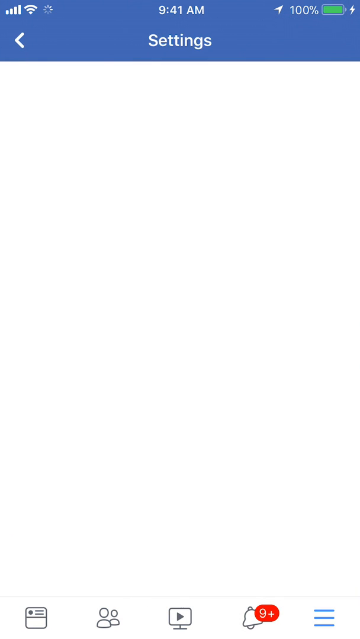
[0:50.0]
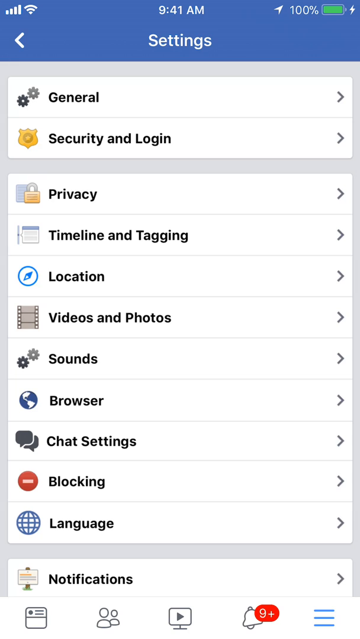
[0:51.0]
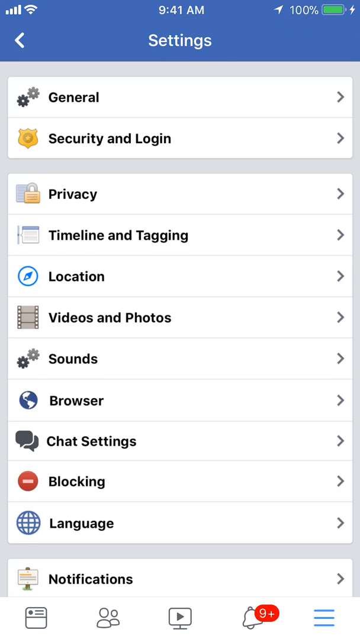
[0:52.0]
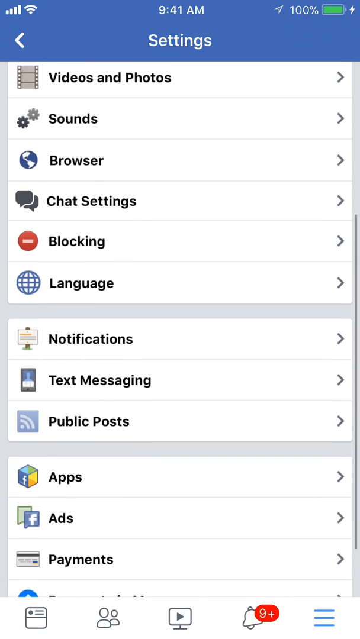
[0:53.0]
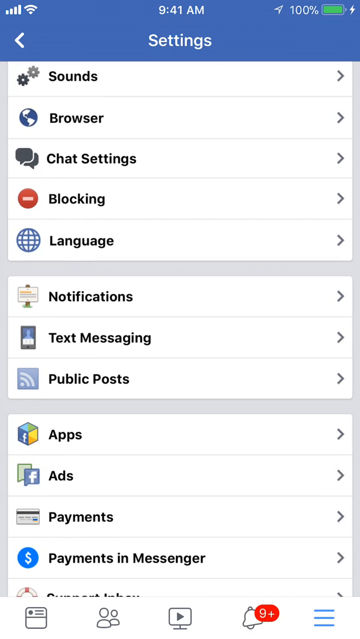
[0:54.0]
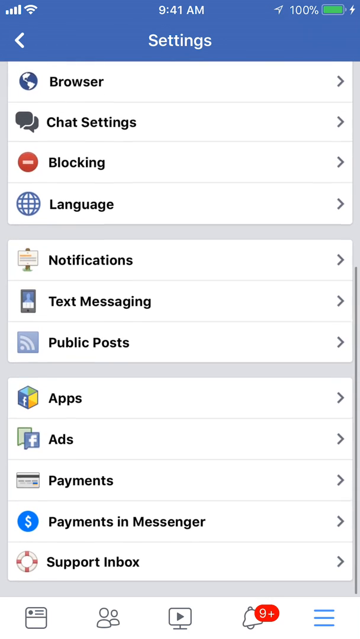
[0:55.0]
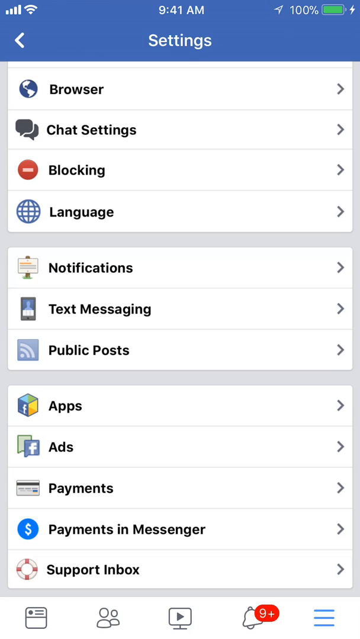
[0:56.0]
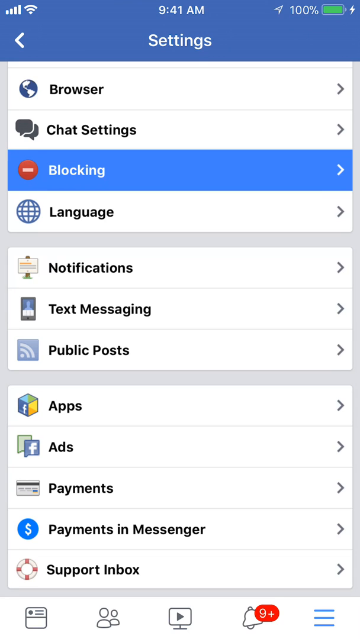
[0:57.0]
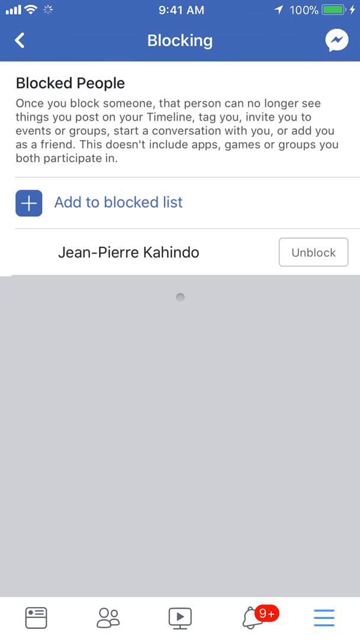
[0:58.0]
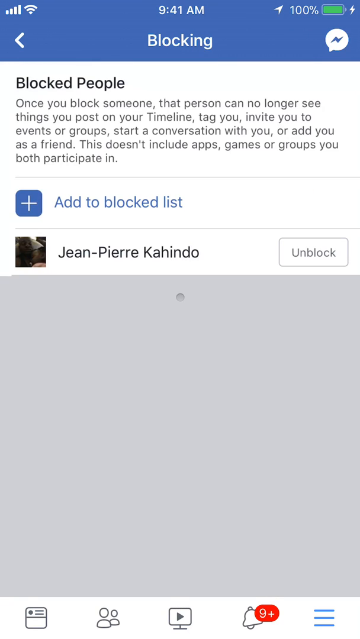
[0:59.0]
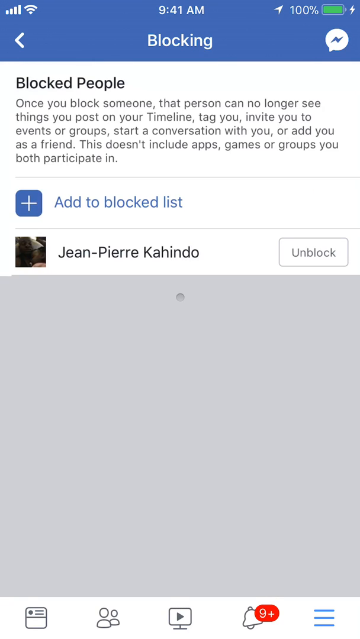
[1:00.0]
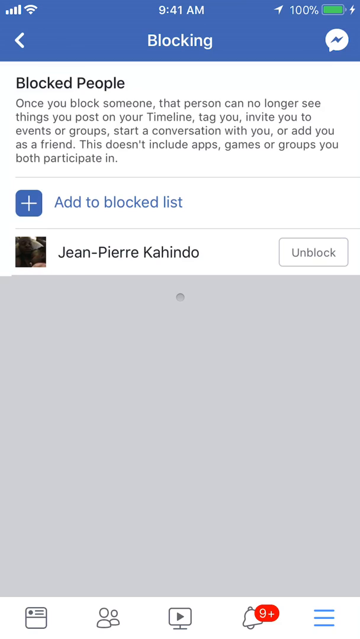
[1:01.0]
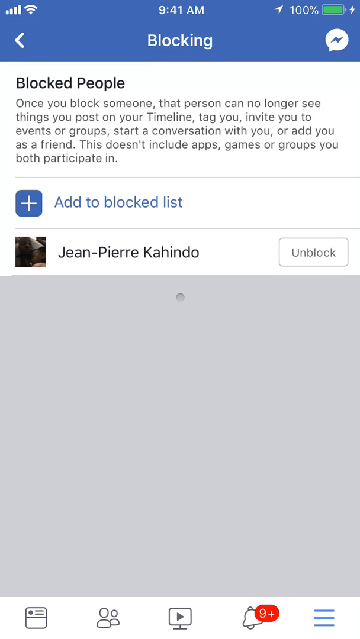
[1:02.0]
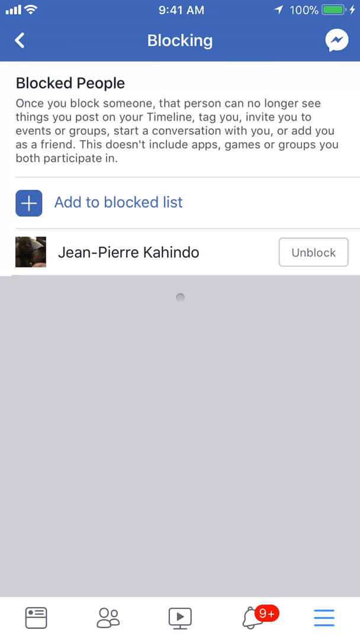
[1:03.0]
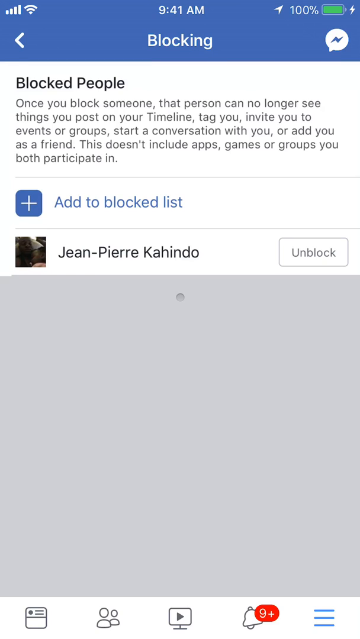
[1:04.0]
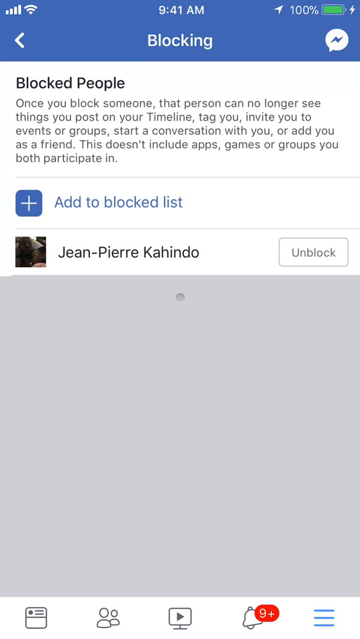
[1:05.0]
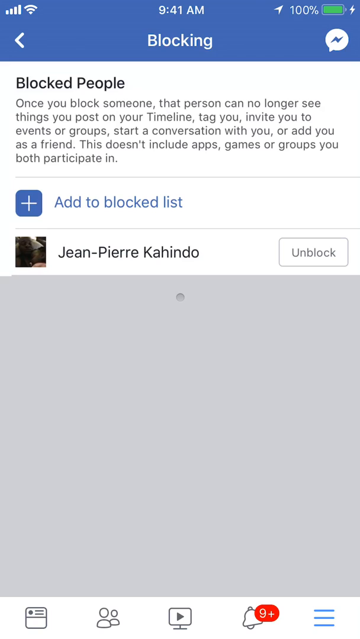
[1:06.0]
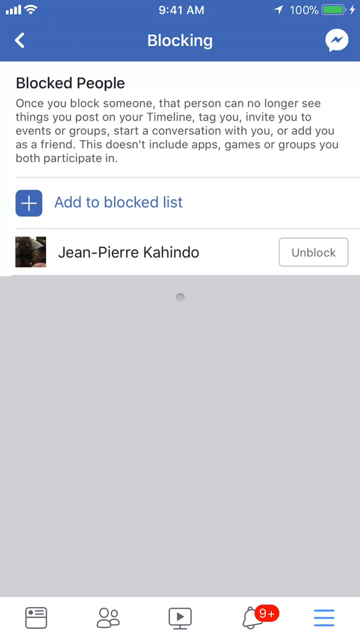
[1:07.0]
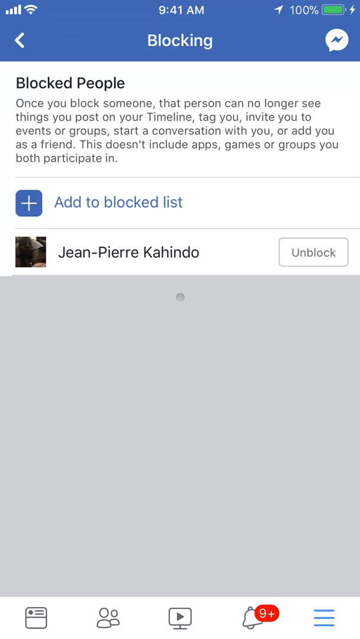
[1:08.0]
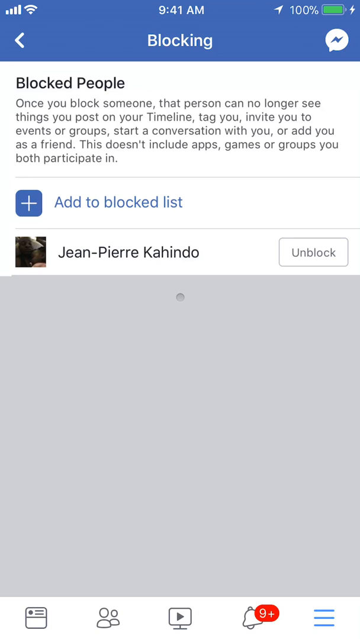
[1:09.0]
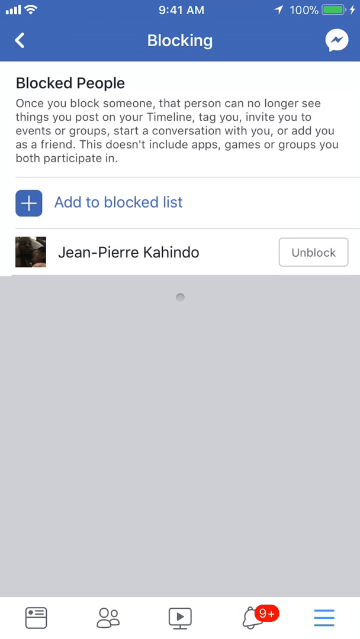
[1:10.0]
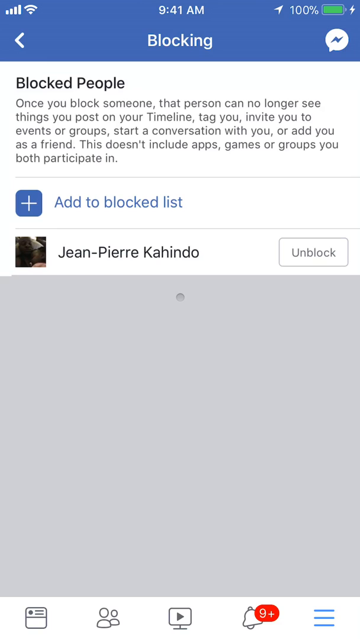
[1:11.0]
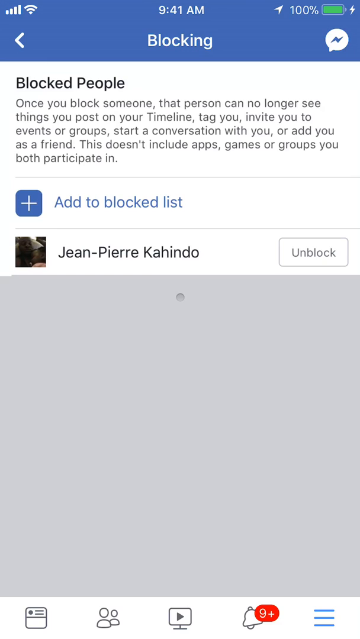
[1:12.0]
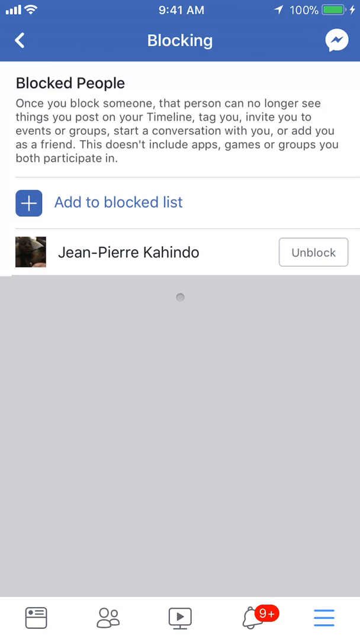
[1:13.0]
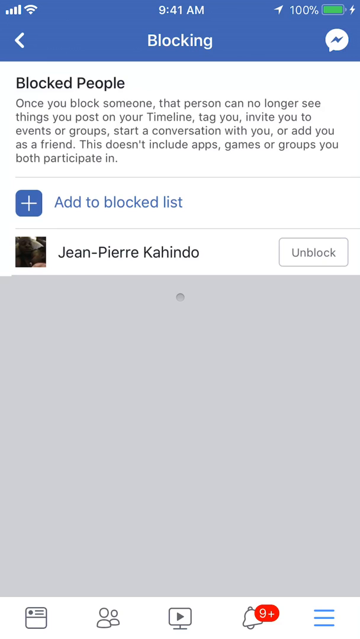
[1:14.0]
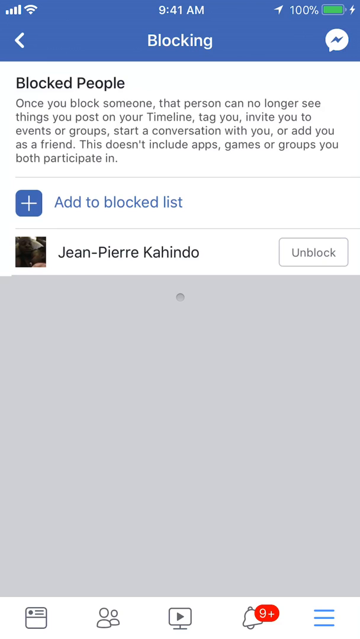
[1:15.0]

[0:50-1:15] Someone is showing their phone and scrolling down, going to a blocking section and then to blocked people. It shows "Jean Pierre Cahindo" as blocked. Text on the screen reads "Once you block someone, that person can no longer see things you post on your timeline, tag you, invite you to events, start a conversation with you or add you as a friend. This doesn't include apps, games or groups you both participate in."